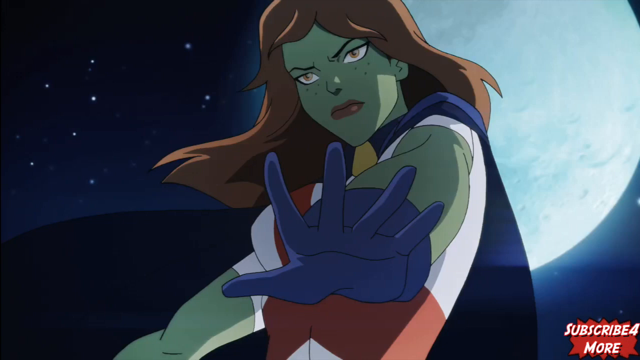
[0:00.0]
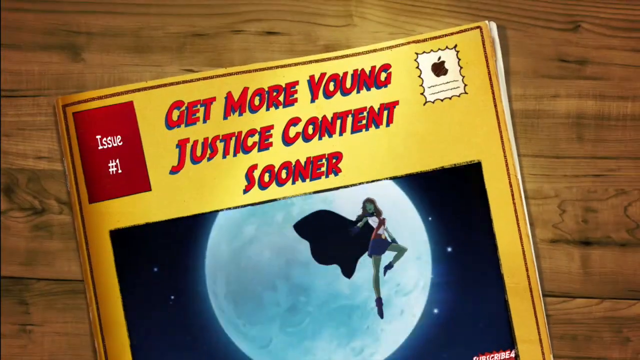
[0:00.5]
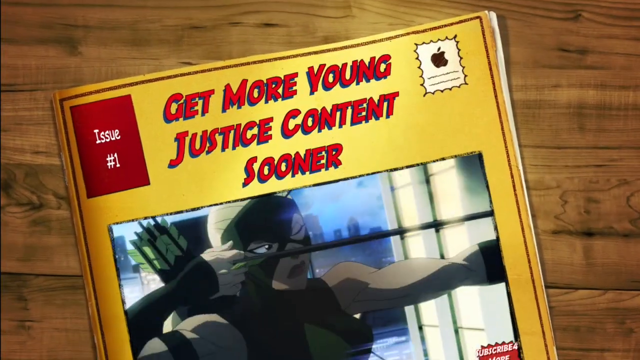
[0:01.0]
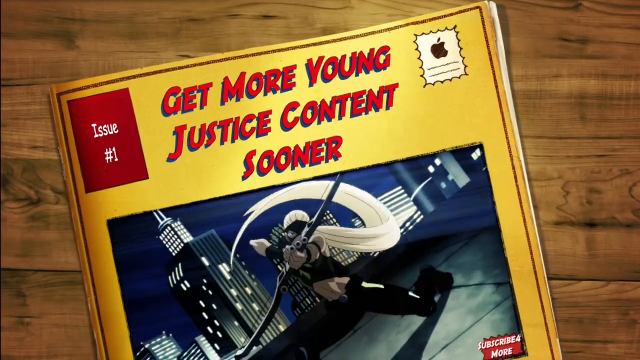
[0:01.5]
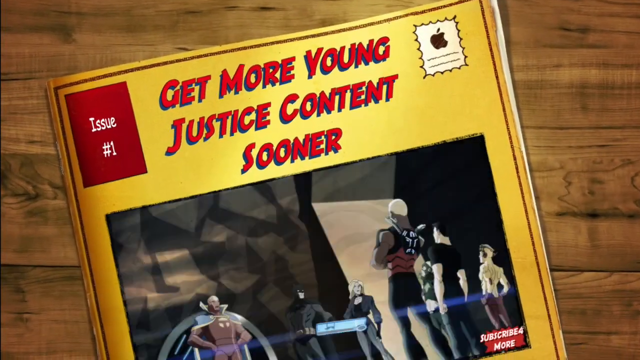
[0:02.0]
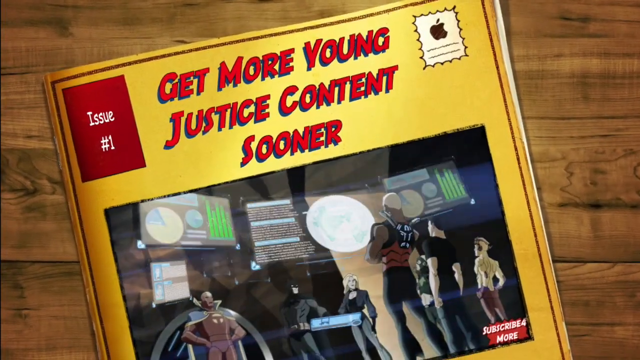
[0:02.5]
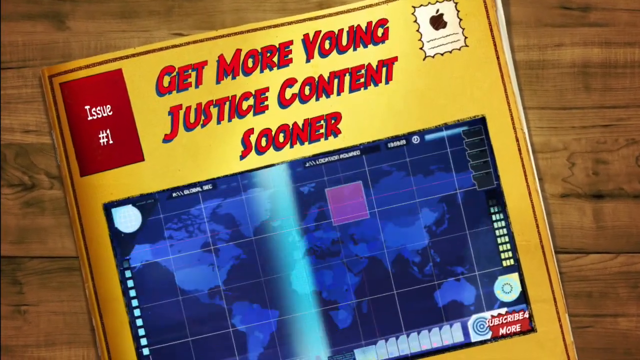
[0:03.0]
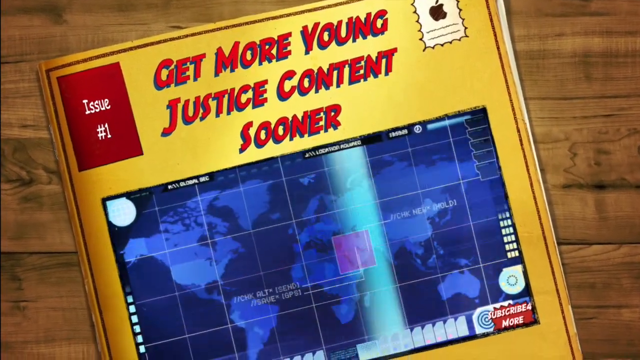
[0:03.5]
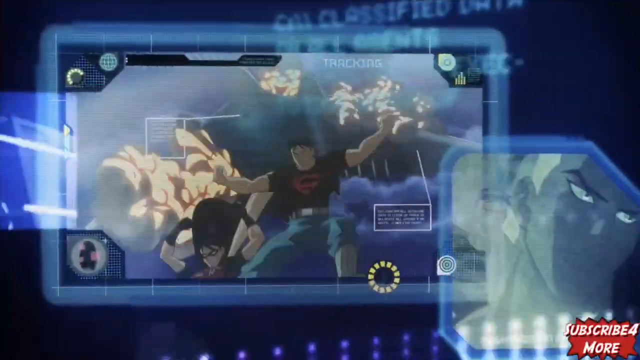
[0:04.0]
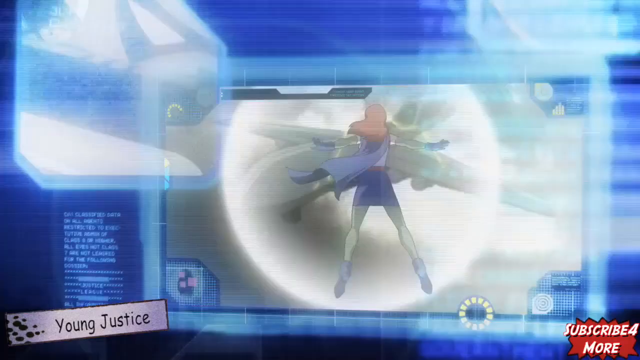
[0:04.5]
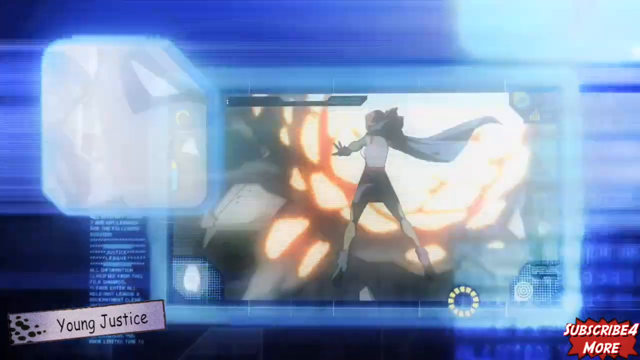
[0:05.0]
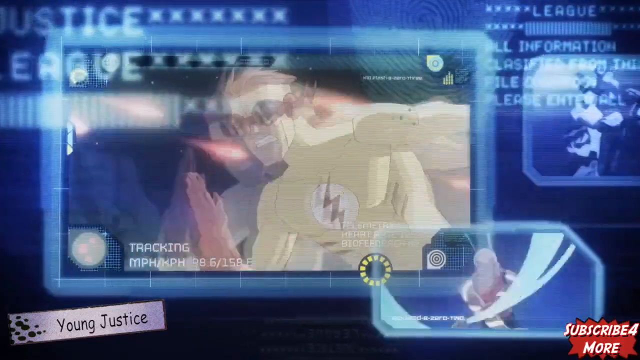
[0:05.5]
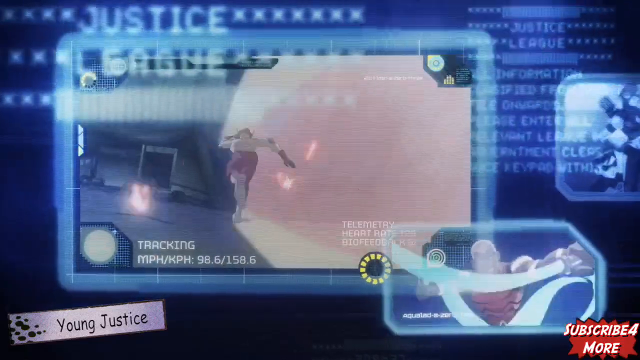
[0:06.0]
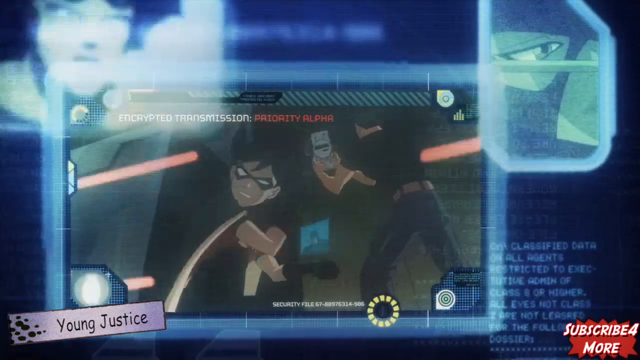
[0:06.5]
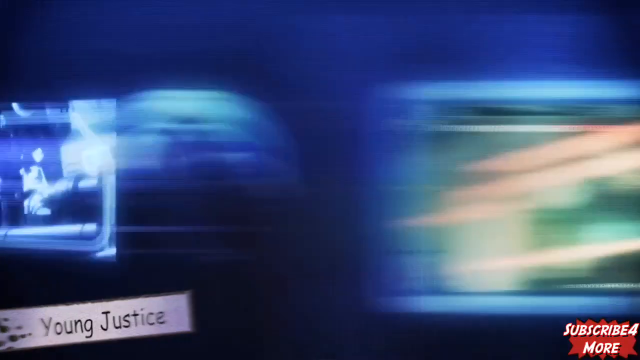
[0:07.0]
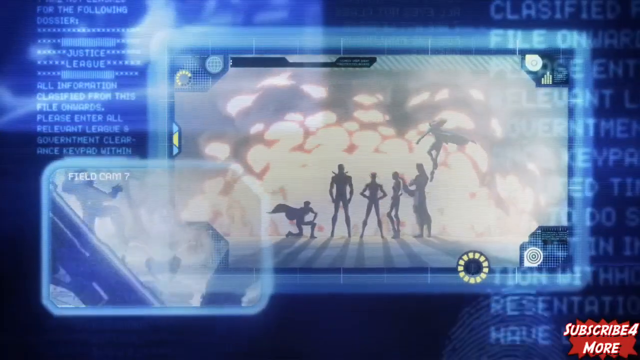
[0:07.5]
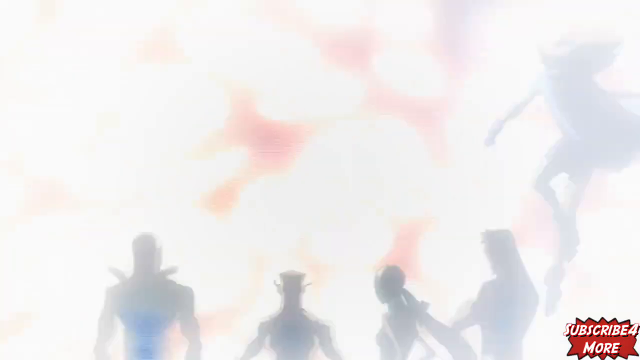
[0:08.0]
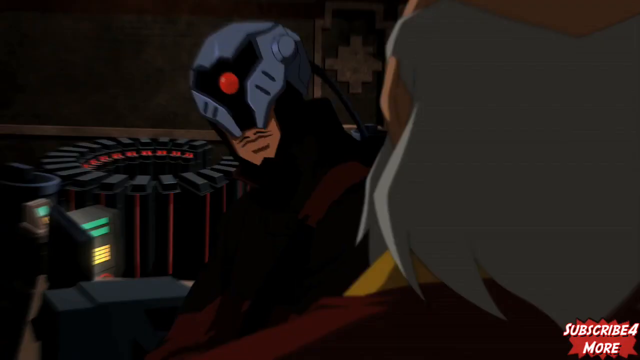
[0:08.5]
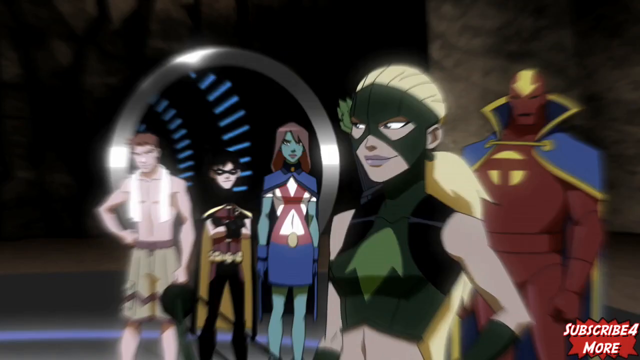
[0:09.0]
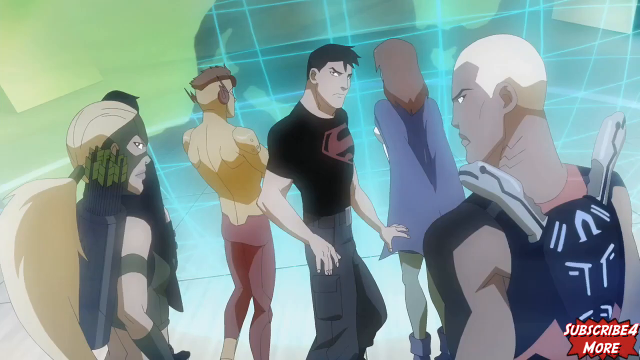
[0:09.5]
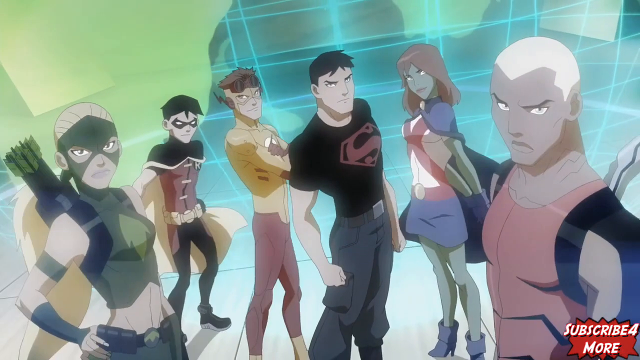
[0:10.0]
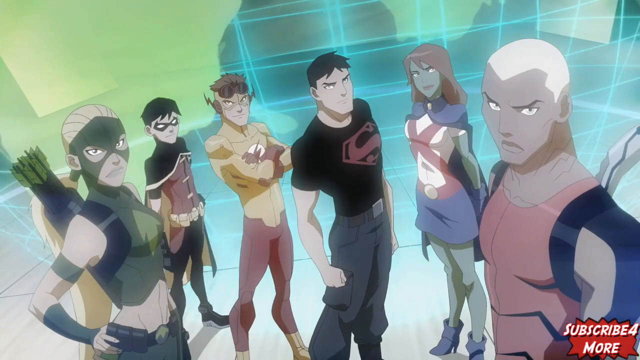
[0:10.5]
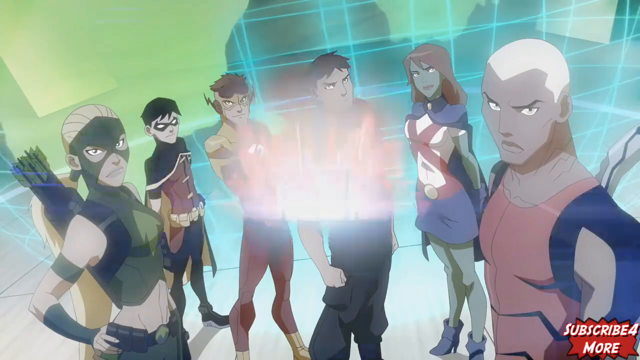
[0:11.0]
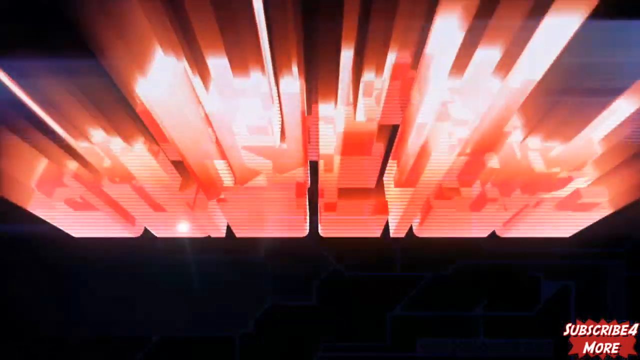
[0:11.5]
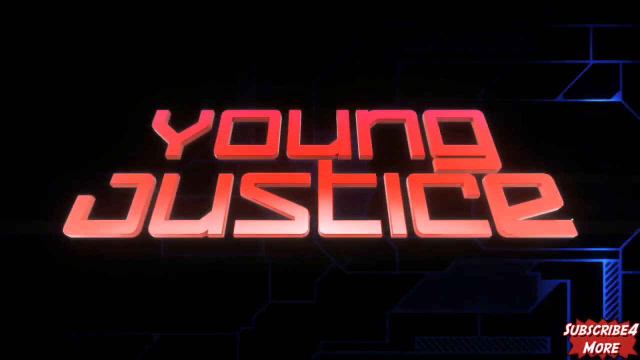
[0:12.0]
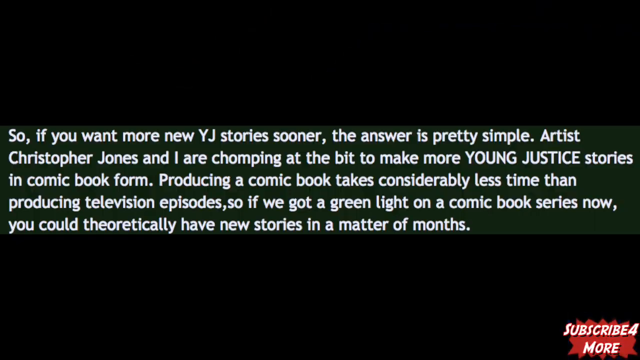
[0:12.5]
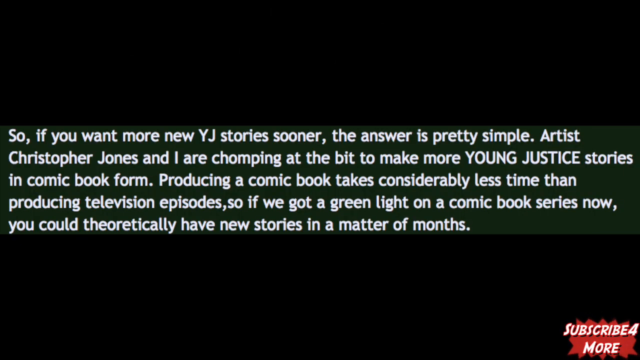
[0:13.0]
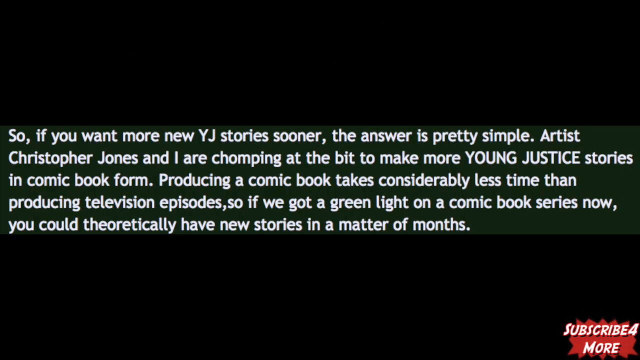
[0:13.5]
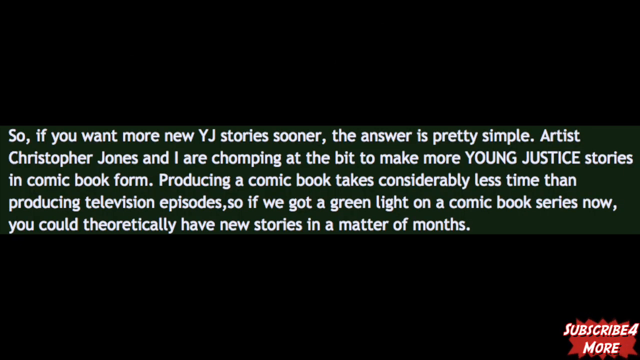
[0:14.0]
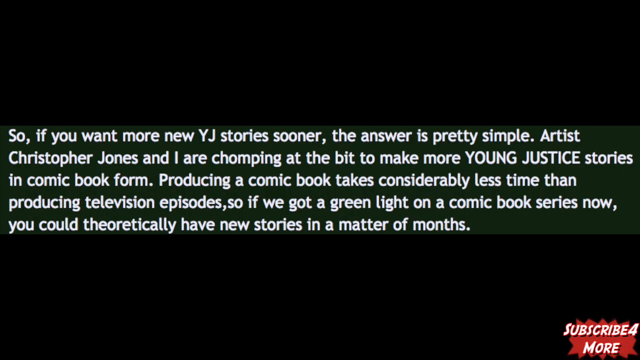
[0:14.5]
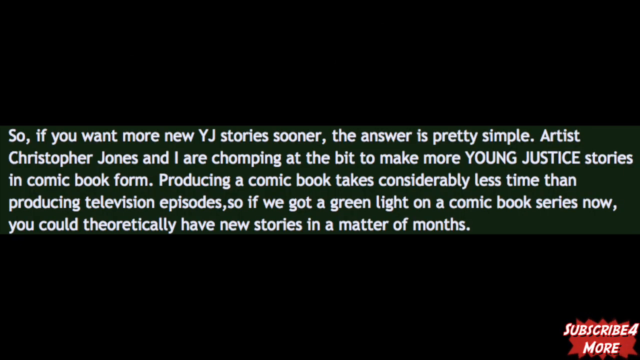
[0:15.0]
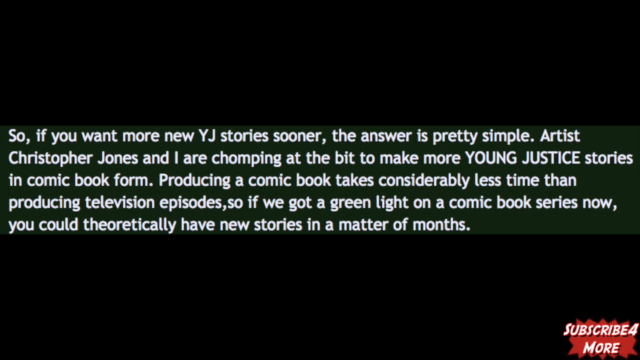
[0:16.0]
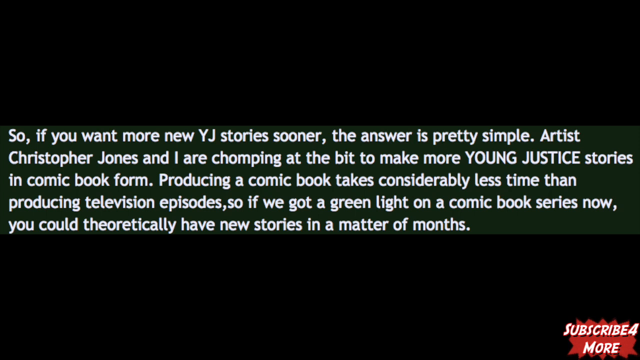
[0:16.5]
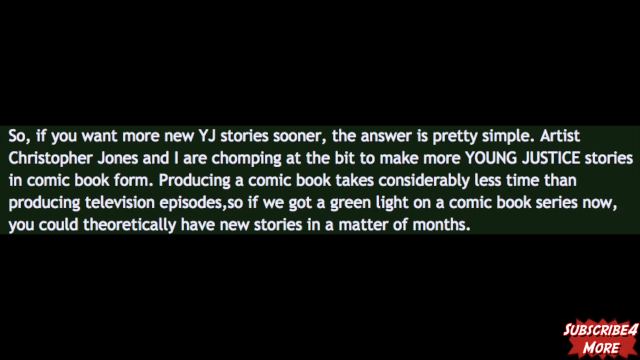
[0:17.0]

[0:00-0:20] A female cartoon character is shown from below. Her shade is green, she is scrunching her face so her eyes are narrow, and she has light green eyes, red flowy hair, a cape and a purple glove. Her hand faces downward with the fingers spread out. The view zooms out to reveal that this is the cover of a comic book. The image transitions to a different video of a woman with blonde hair and a mask, with bows and arrows; she aims an arrow and shoots, and the angle changes so the arrow comes right at the viewer. The video cuts to futuristic scenes with a lot of computer screens and blue backgrounds, and a fast-moving series of different action shots of different characters. There appears to be one group that almost seems to fight together. A dark screen follows, with red lettering that jumps onto the page reading "young justice", and a streak of light passes over it from right to left. Next, white text over black talks about the series, and in the bottom right corner a red box asks viewers to subscribe for more.